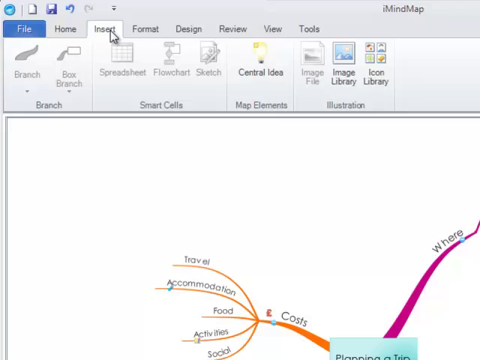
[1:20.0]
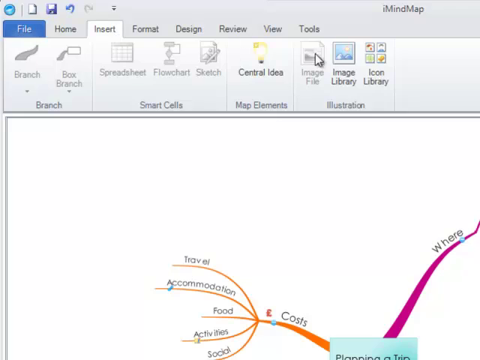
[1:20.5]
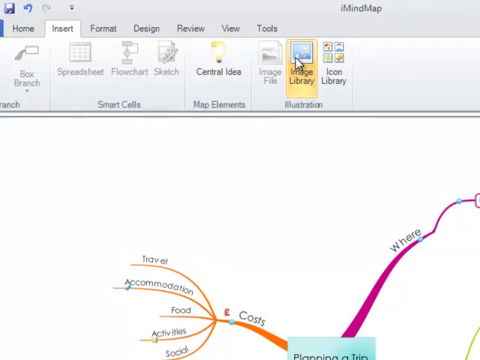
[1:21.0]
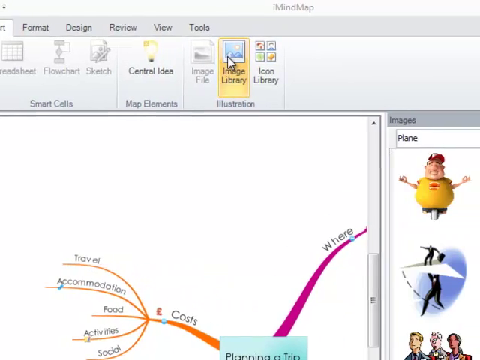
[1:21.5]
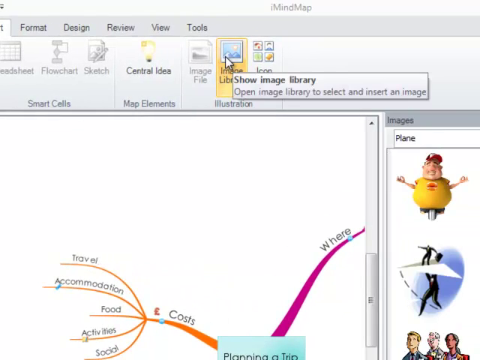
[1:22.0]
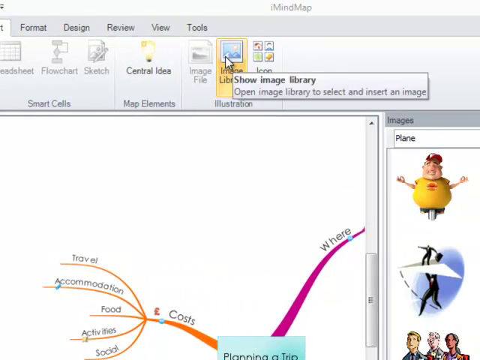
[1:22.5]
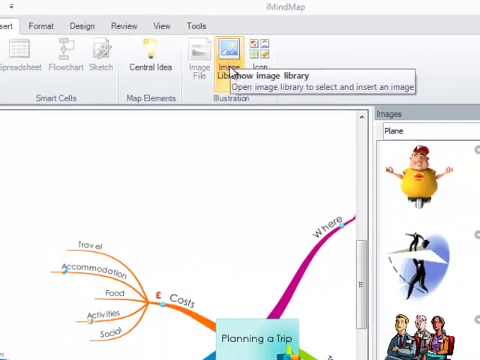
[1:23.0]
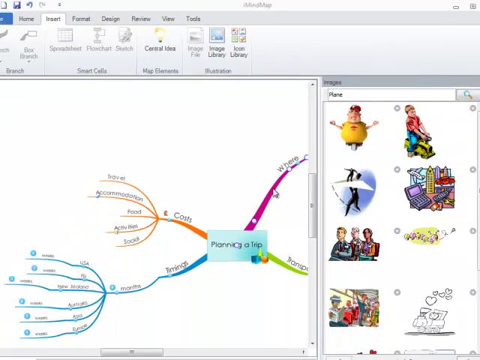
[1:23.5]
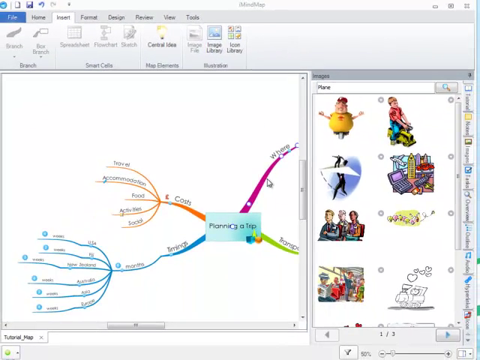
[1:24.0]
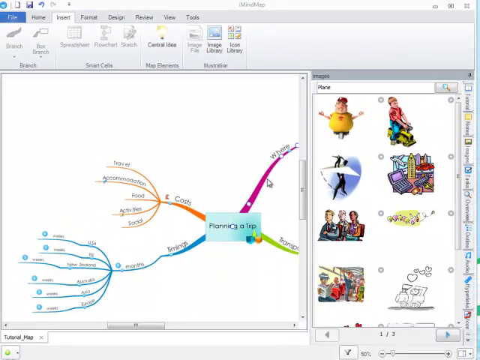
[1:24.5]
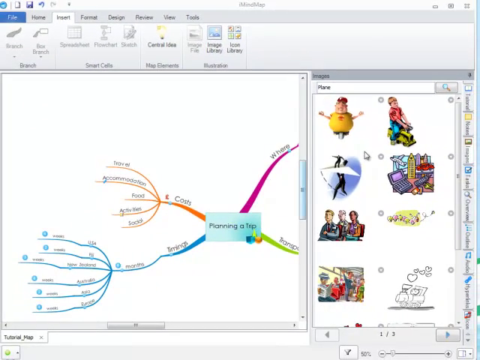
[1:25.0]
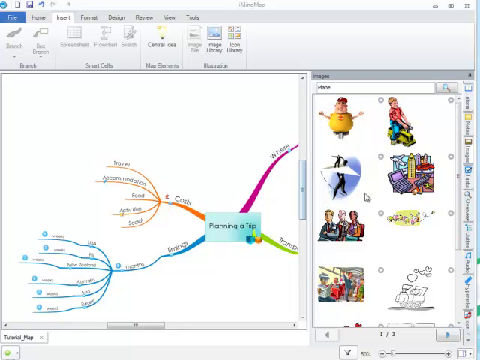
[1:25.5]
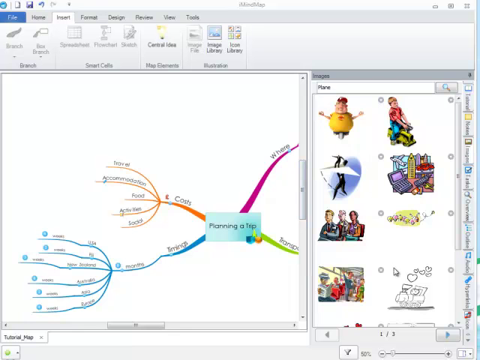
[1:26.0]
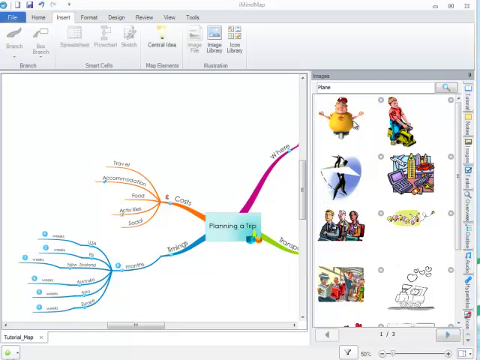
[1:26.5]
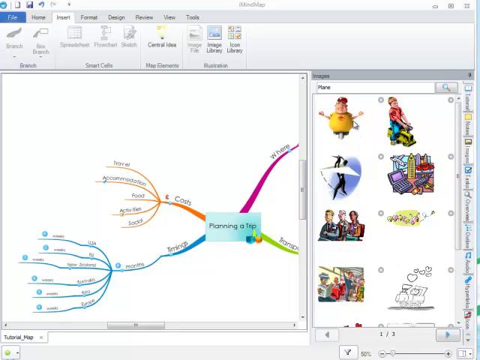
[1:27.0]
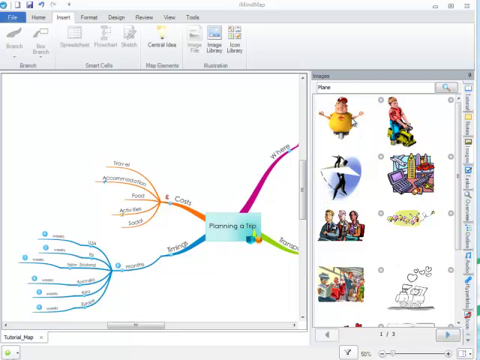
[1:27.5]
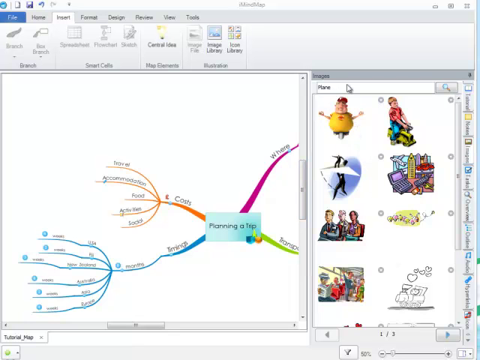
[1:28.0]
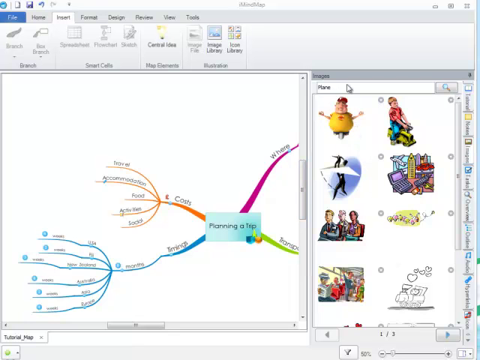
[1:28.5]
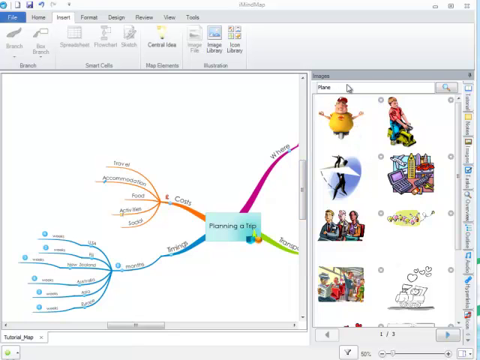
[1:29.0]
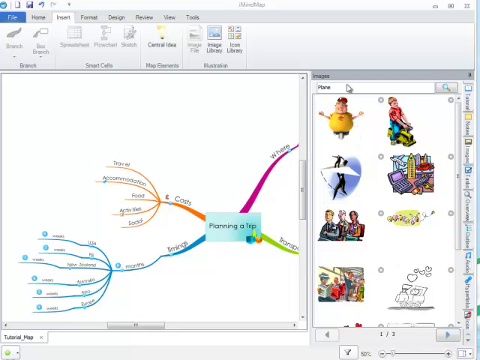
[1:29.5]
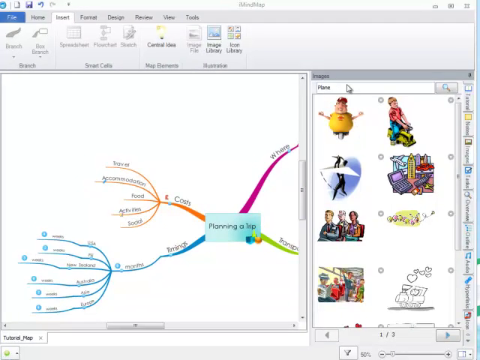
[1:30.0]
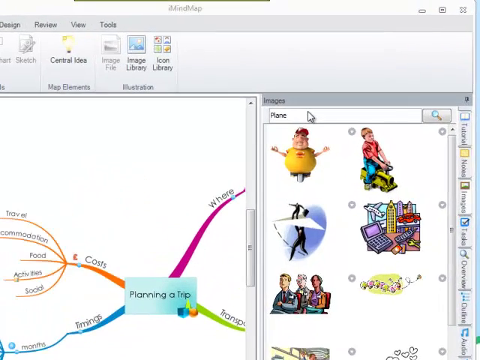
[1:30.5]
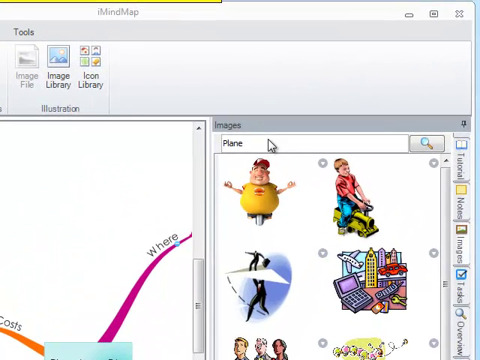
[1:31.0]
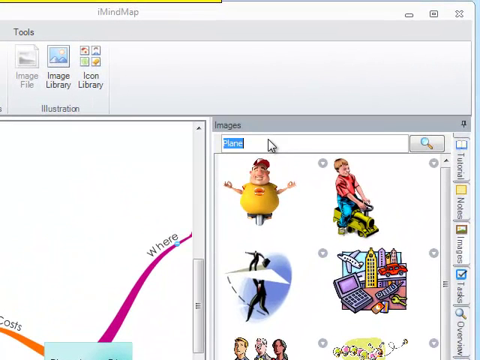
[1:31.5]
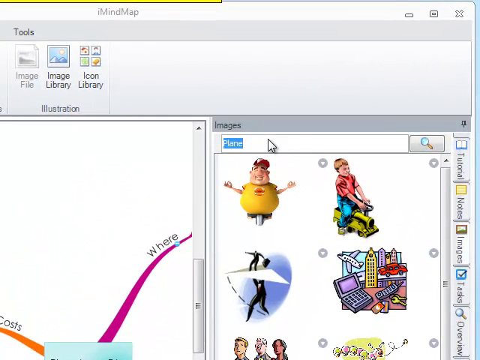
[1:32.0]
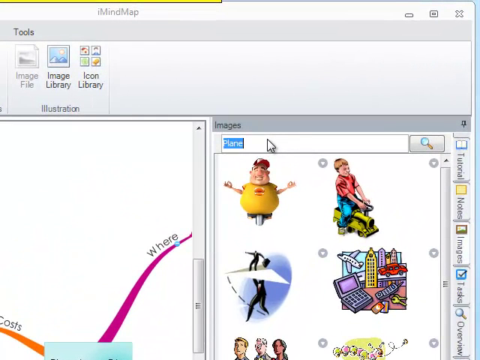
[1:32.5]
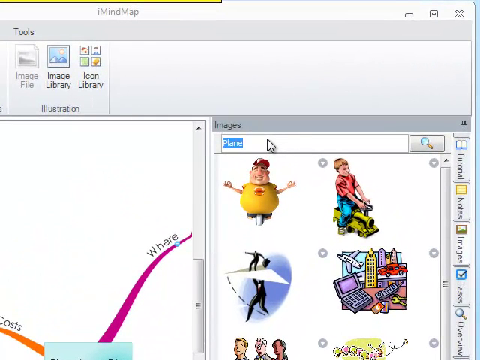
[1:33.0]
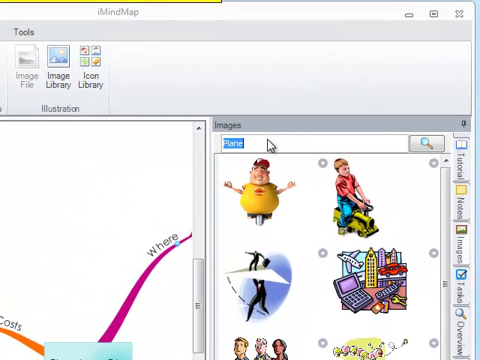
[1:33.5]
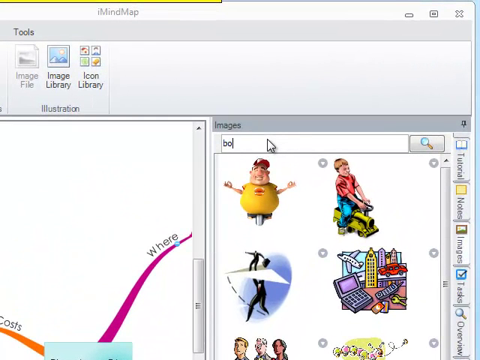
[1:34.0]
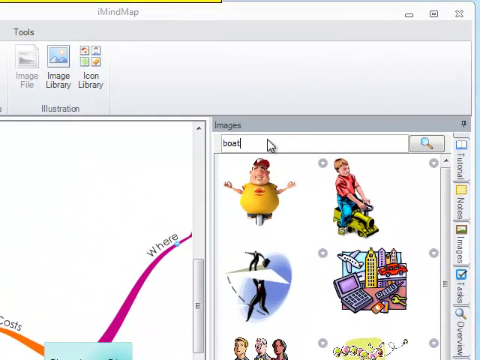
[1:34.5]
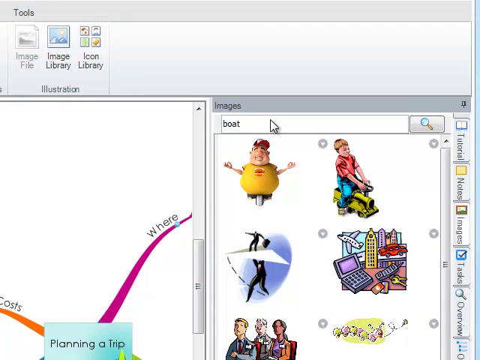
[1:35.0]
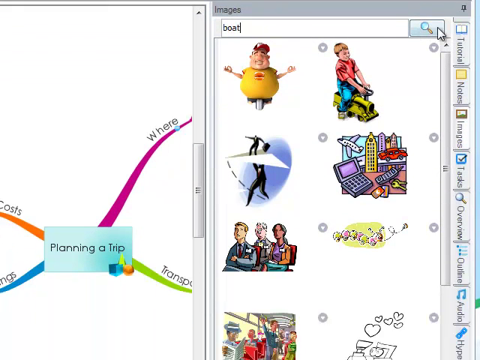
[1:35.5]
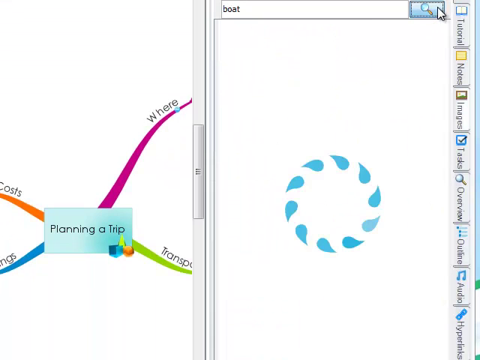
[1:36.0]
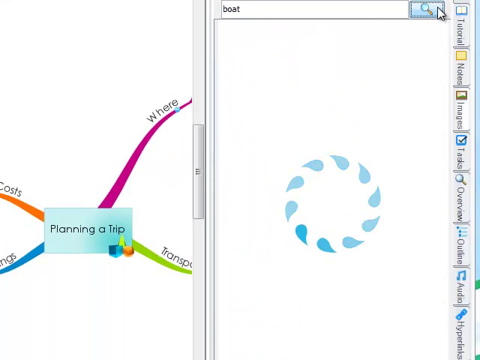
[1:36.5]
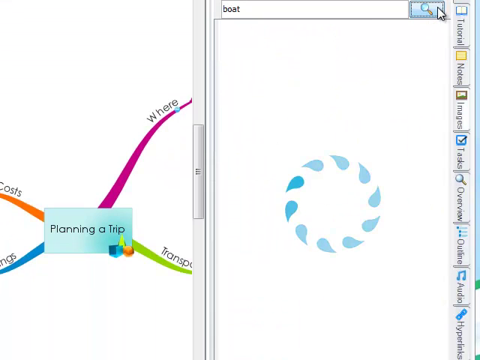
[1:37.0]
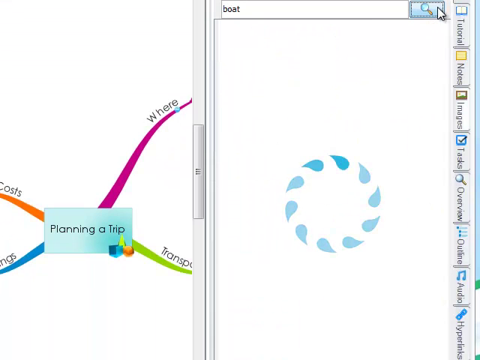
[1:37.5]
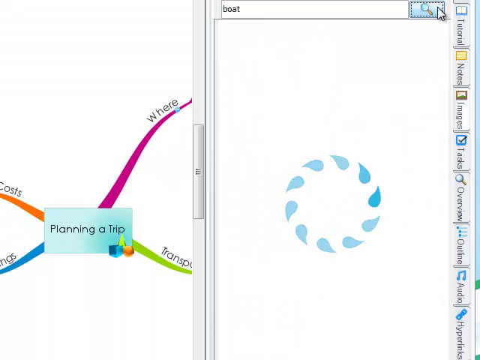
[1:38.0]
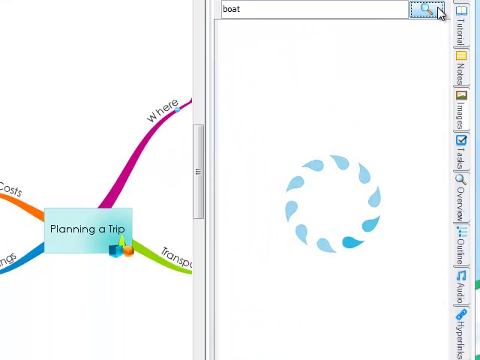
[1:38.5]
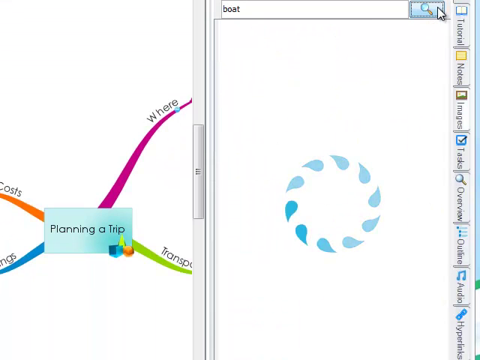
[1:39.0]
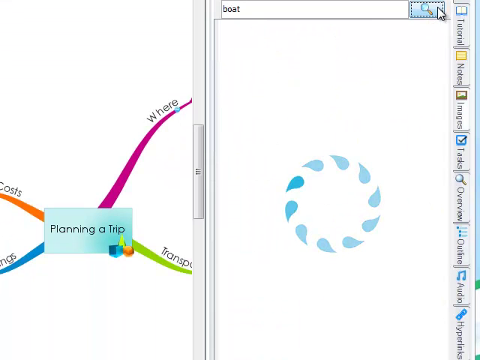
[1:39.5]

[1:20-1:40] The cursor moves to image library, with "illustration" written right under it. It highlights, and the text reads "show image library" and "open image library to select and insert an image". The template is zoomed in again, and the cursor goes back to the search bar on the right with different characters. The word "plane" is highlighted and deleted, and the word "boat" is typed to replace it. A loading indicator appears that looks like water droplets going round and round, and meanwhile the branches of the trip plan are zoomed in and clearly visible. On the extreme right there are different sections with icons lying horizontally, with small squares on each option; the option "tasks" has a tick.